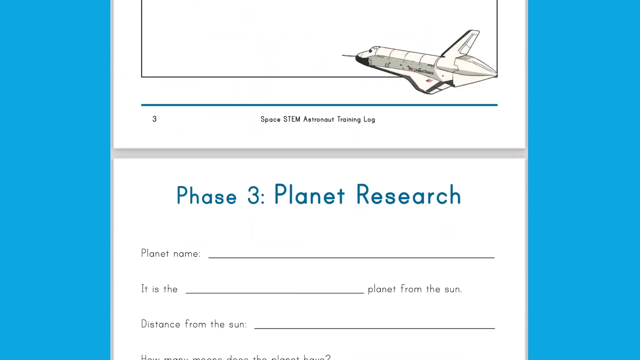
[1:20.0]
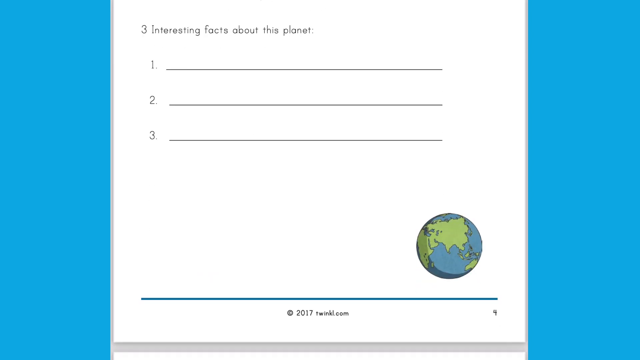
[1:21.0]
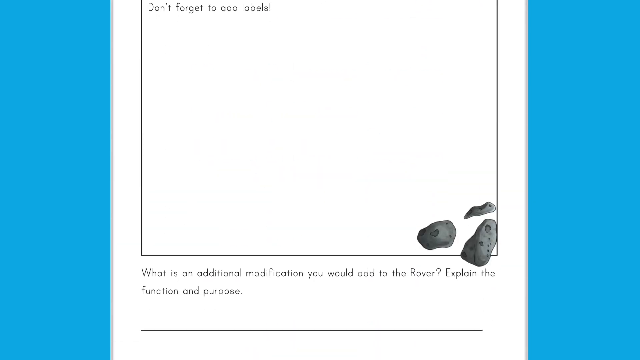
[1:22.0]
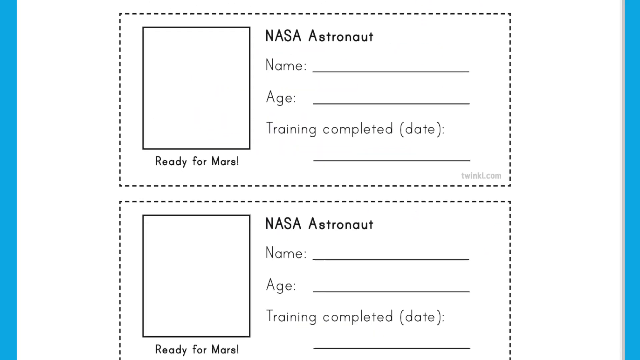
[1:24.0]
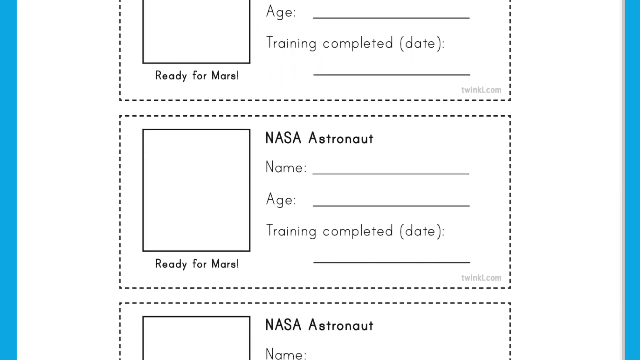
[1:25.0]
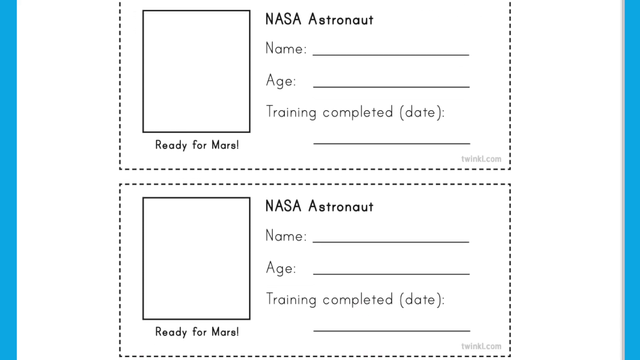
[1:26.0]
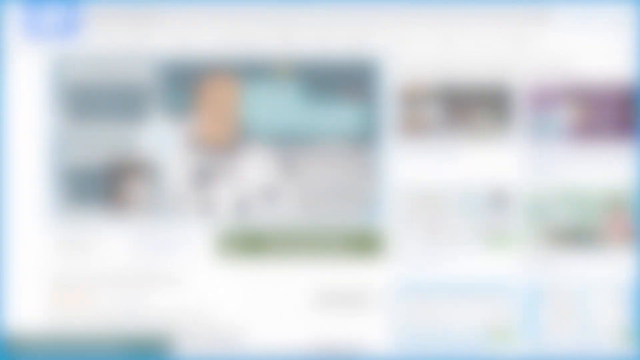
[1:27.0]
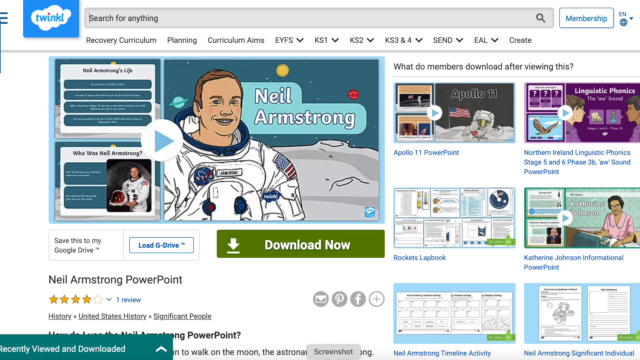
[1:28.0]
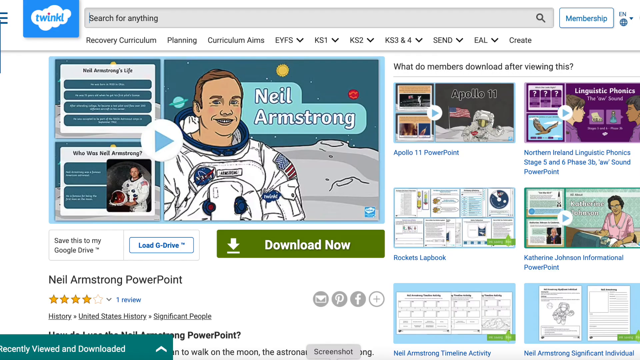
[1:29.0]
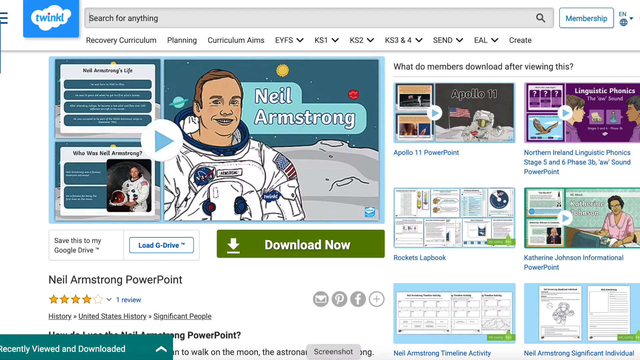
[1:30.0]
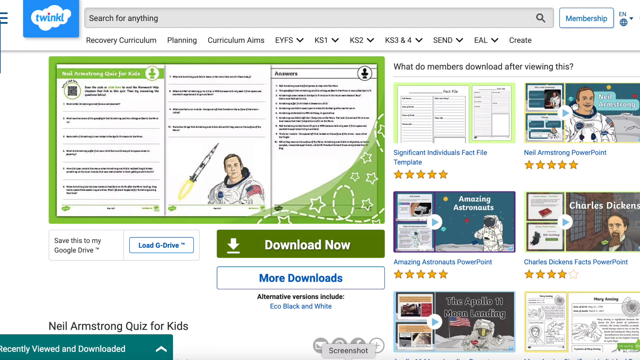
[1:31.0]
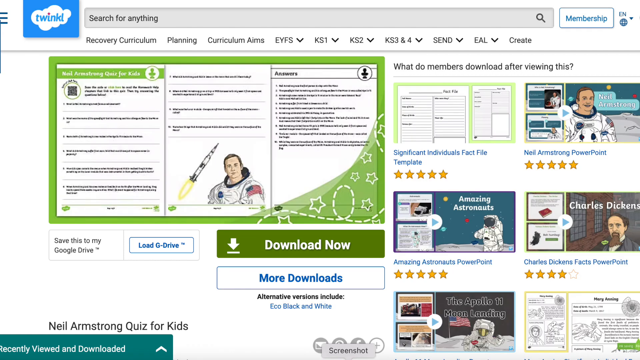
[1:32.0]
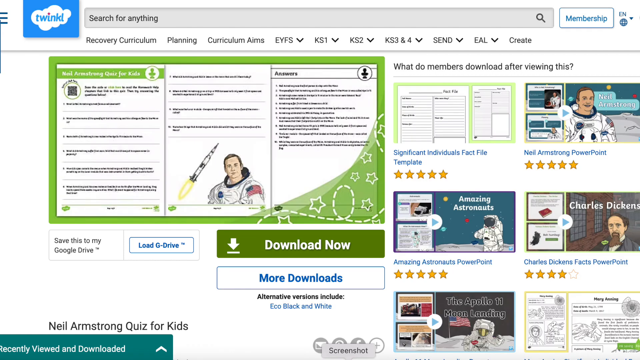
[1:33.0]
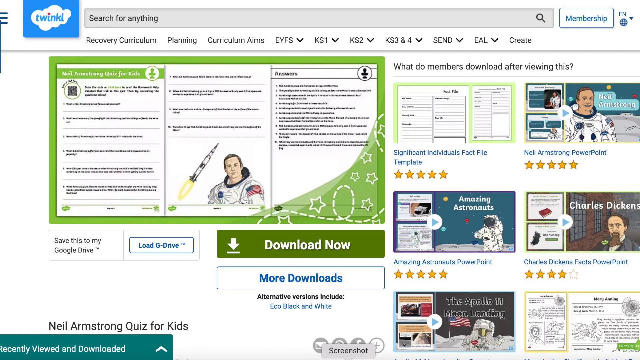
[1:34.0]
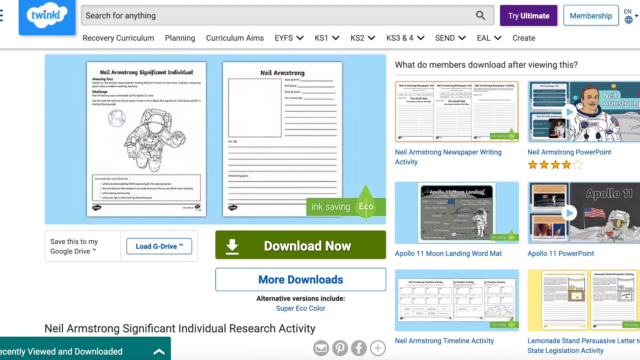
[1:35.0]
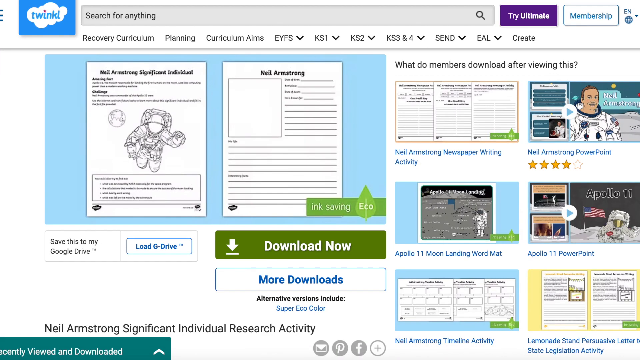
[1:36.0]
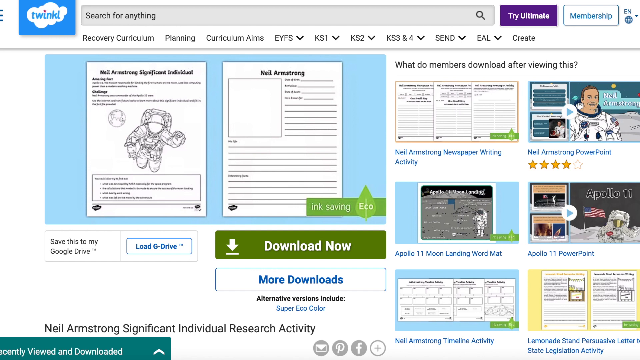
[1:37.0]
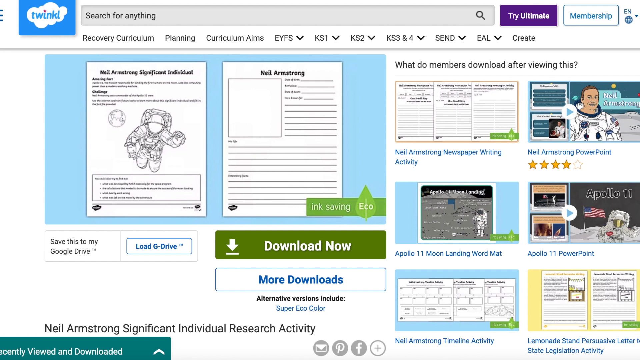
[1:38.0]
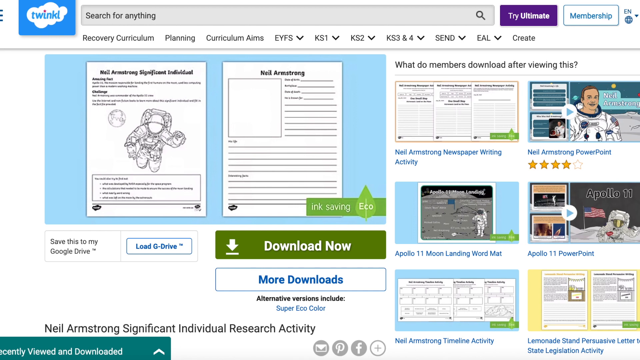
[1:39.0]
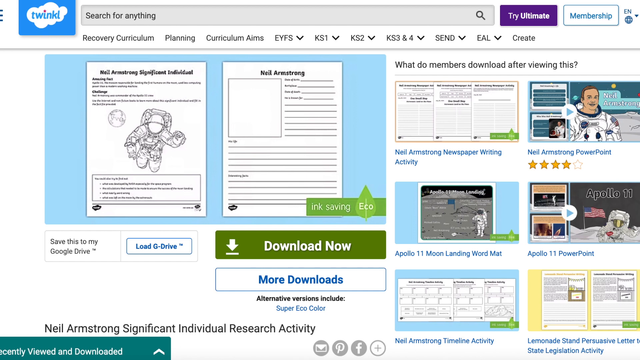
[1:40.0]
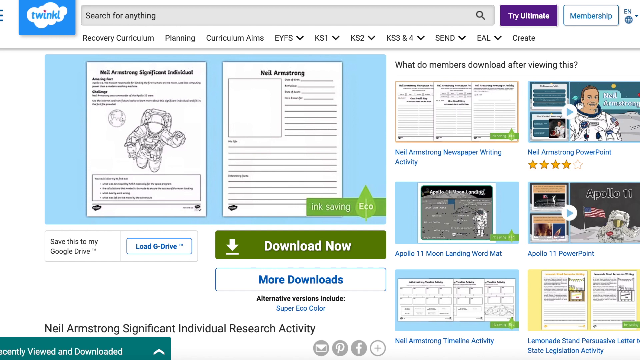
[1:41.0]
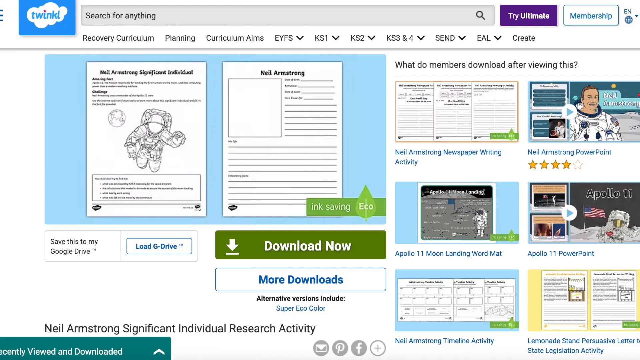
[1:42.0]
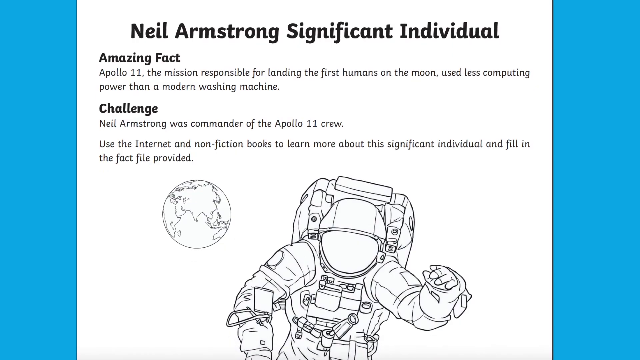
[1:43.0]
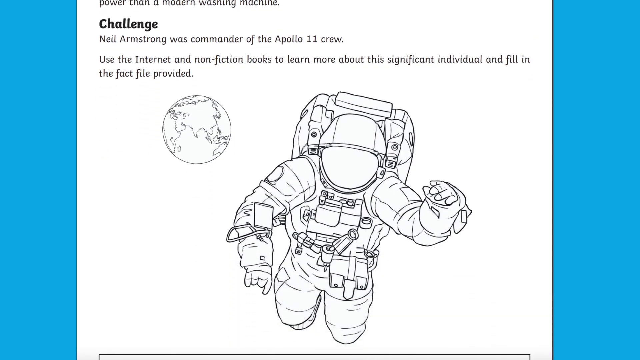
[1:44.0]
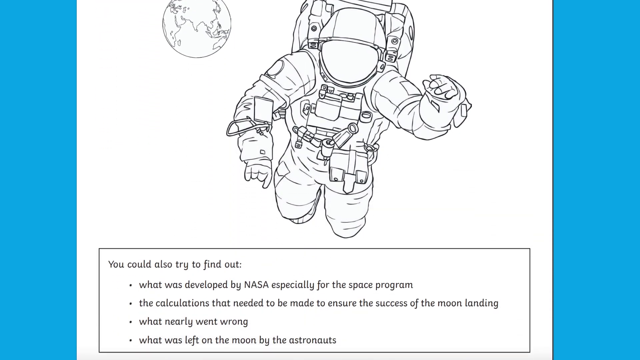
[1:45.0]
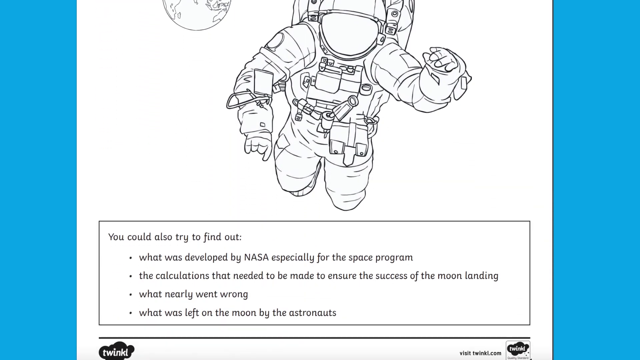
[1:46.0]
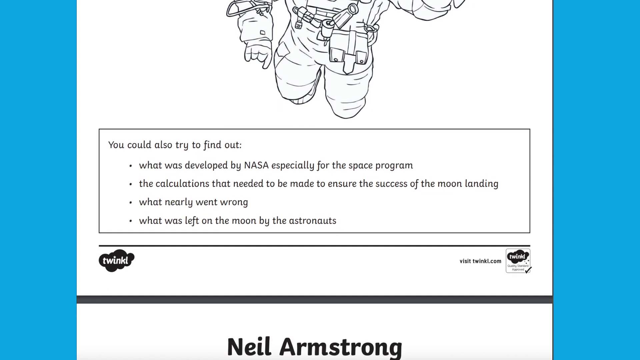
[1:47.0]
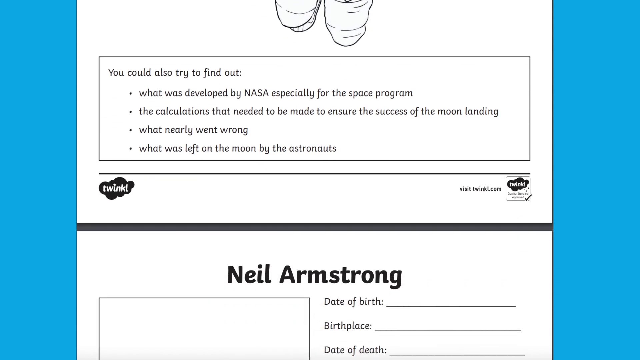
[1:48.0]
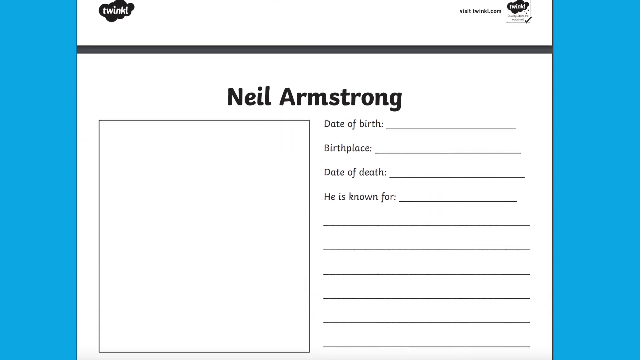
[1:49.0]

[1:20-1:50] A worksheet page reads "Phase 3, Planet Research", dealing with planets and space travel, and another reads "Phase 4, Rover Design". There is a box for quizzing knowledge about astronauts, with spaces for name, age and training completed date. Different pages of the worksheet are shown. The download website appears to have dozens to hundreds of downloadable titles.